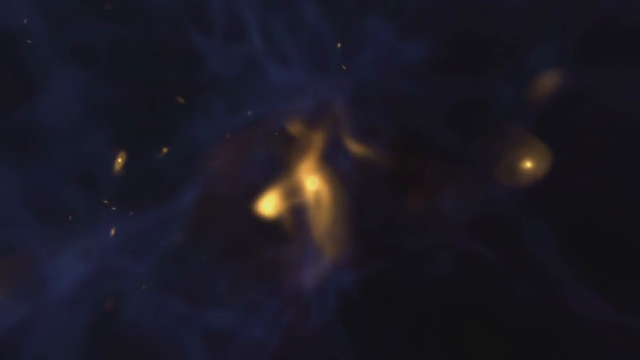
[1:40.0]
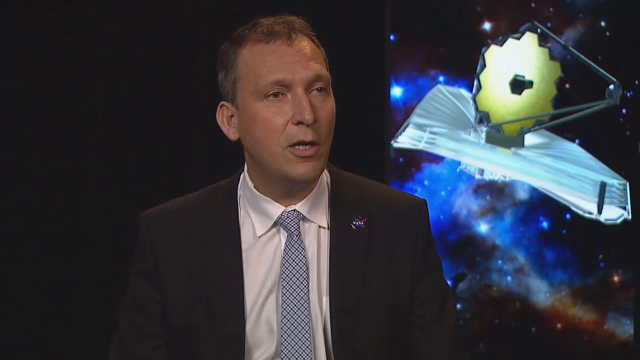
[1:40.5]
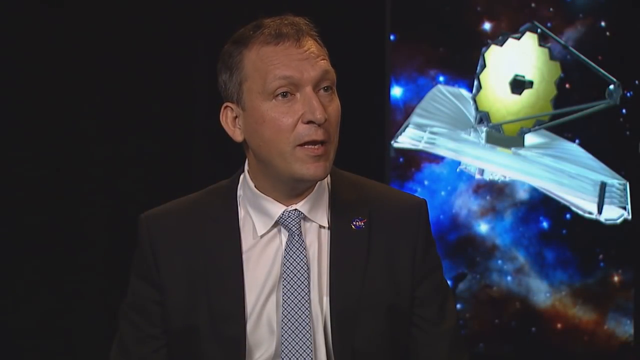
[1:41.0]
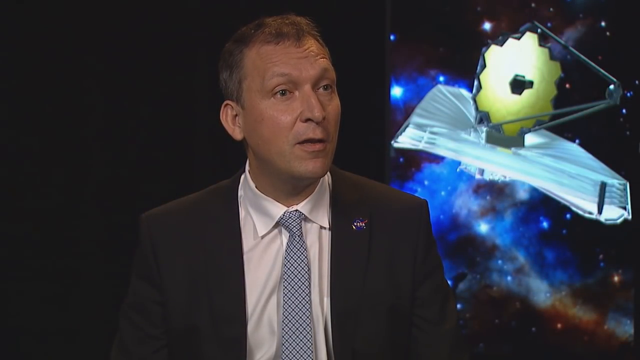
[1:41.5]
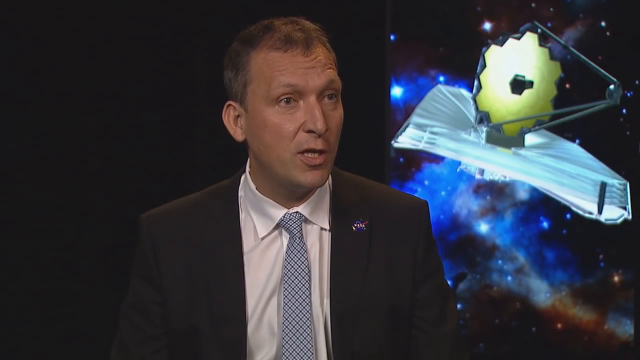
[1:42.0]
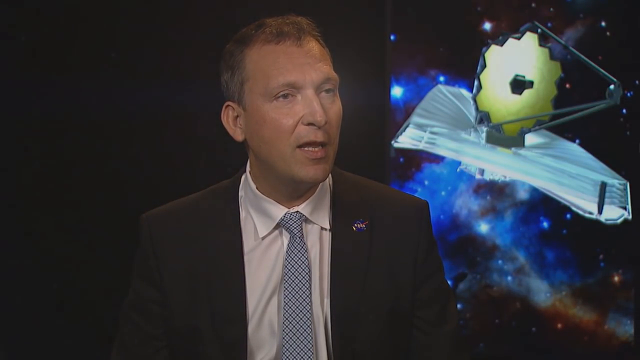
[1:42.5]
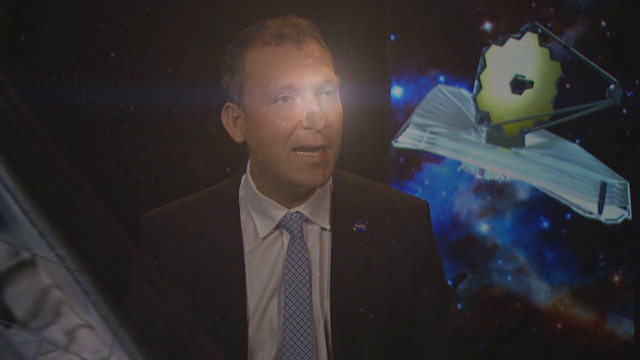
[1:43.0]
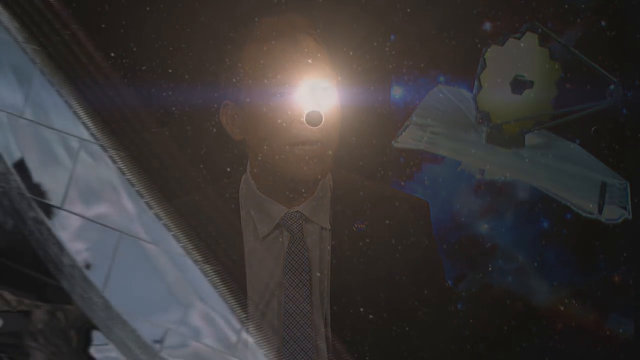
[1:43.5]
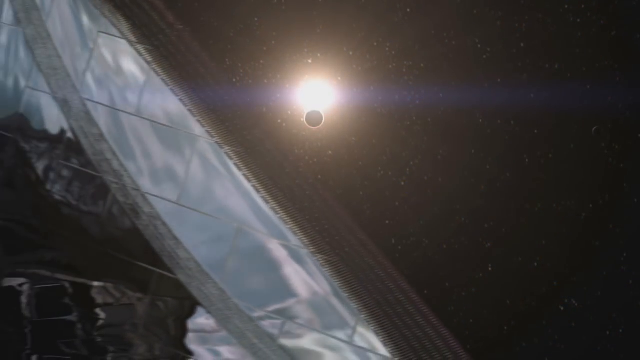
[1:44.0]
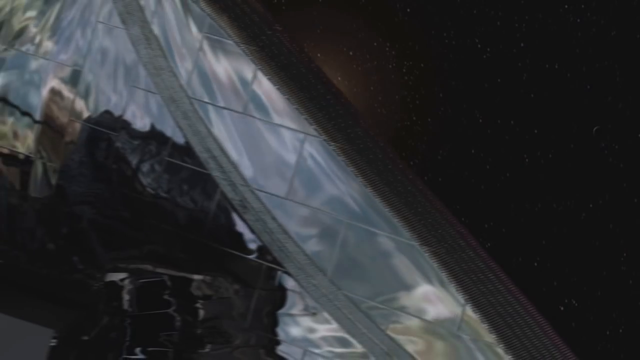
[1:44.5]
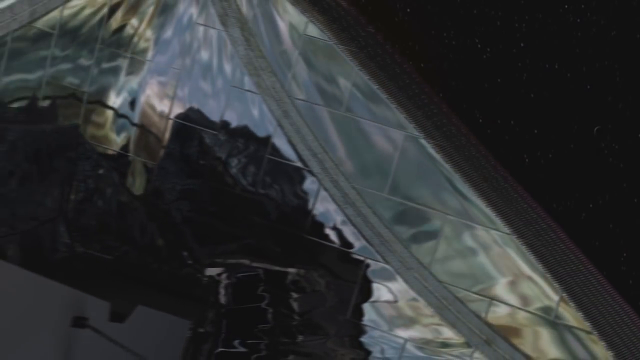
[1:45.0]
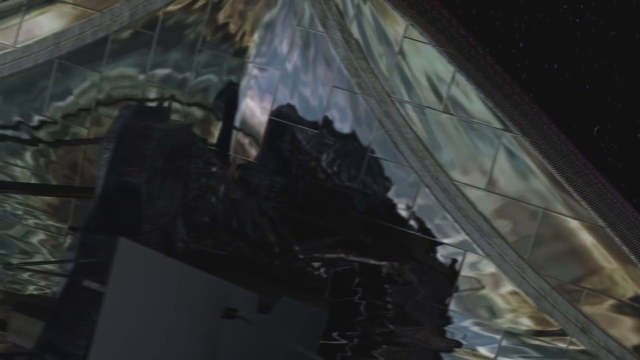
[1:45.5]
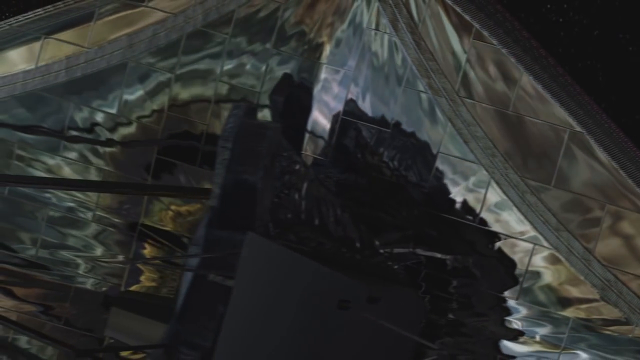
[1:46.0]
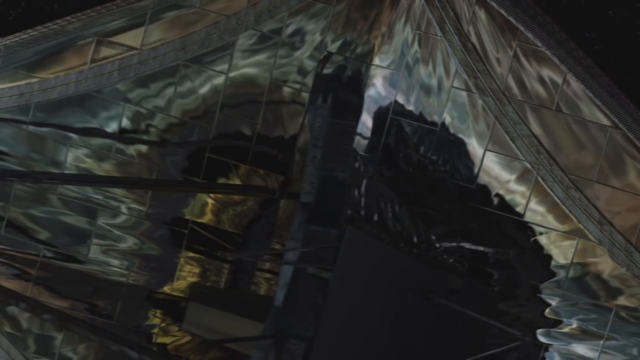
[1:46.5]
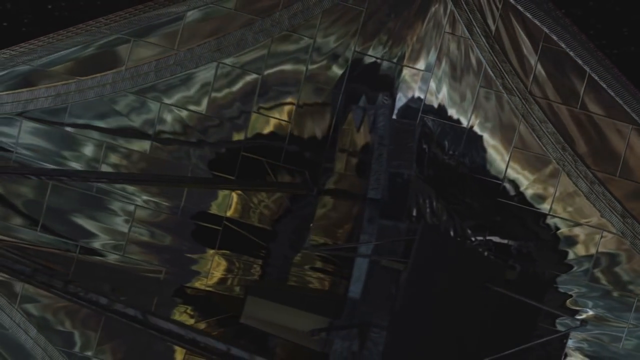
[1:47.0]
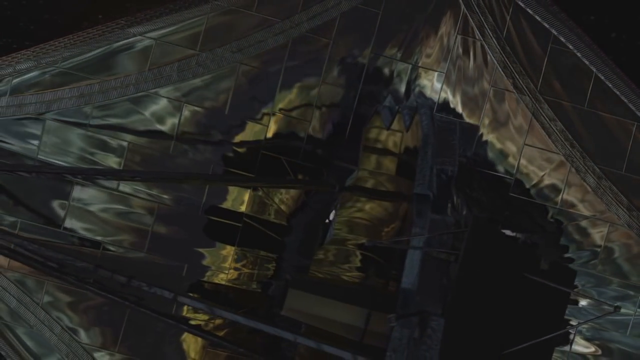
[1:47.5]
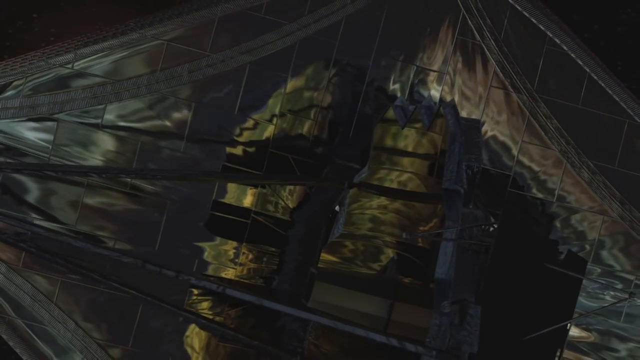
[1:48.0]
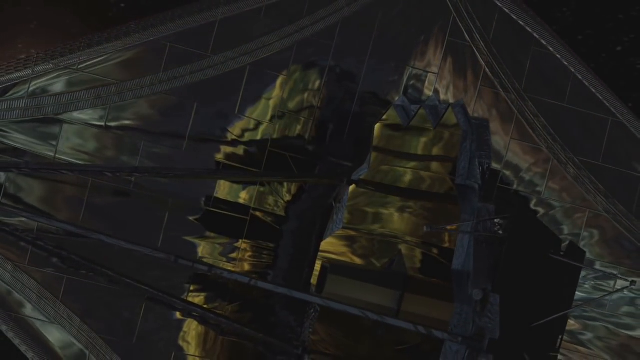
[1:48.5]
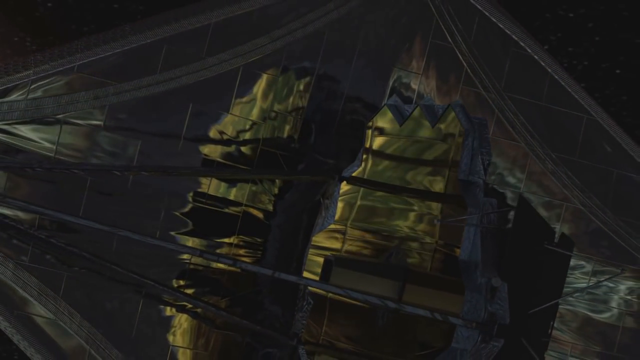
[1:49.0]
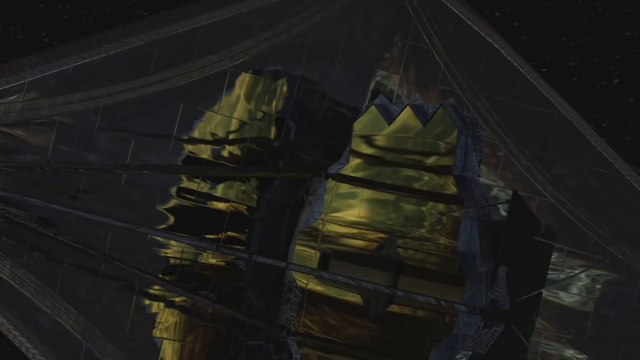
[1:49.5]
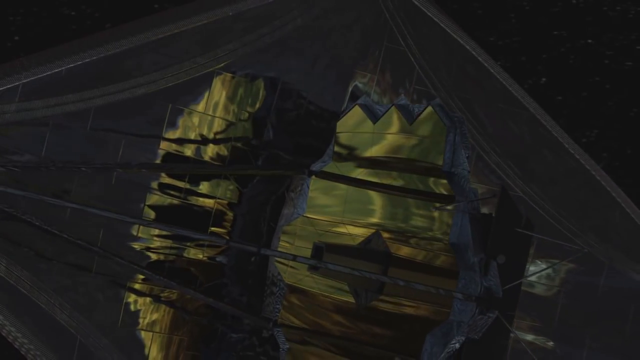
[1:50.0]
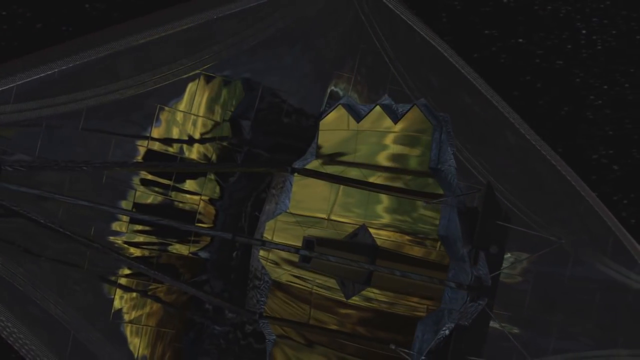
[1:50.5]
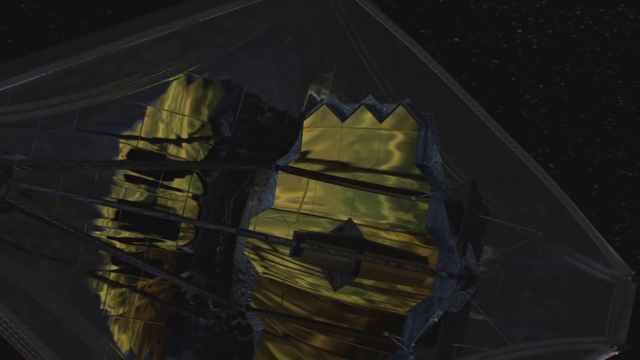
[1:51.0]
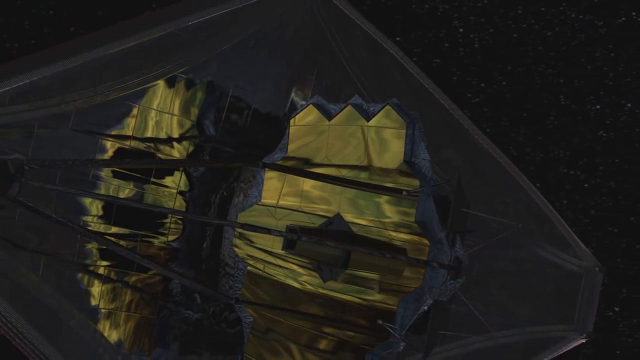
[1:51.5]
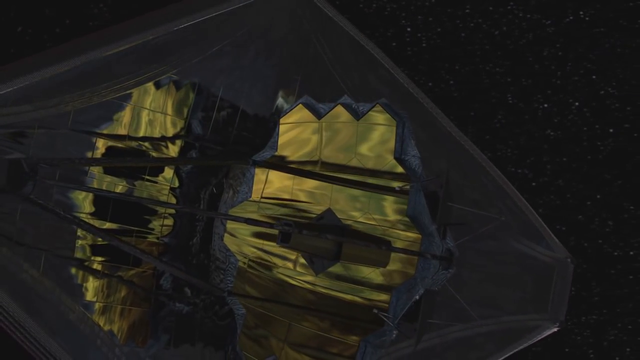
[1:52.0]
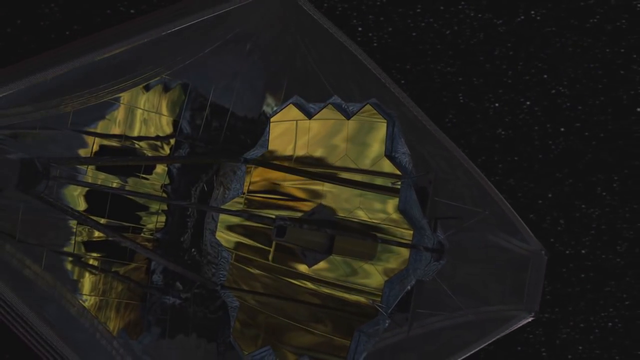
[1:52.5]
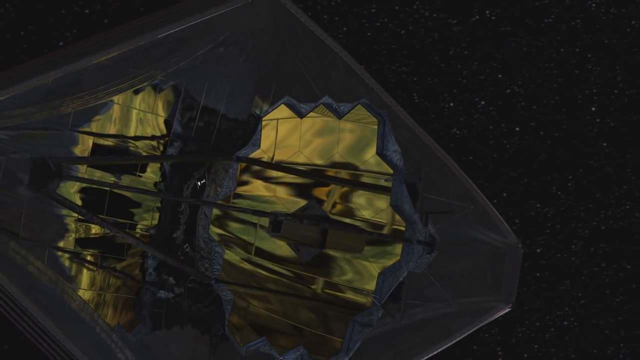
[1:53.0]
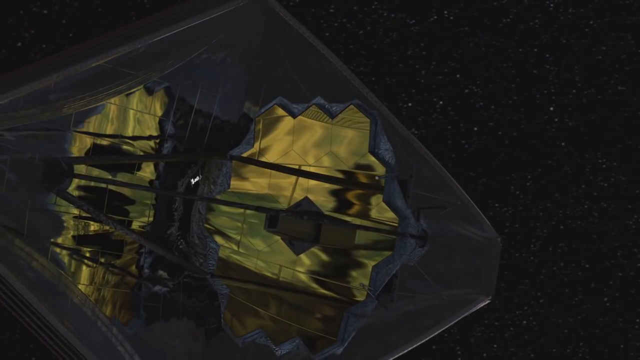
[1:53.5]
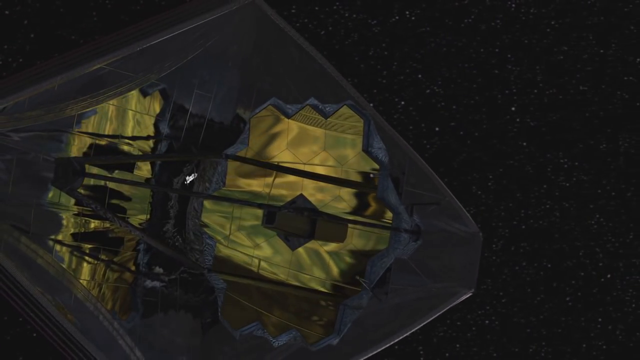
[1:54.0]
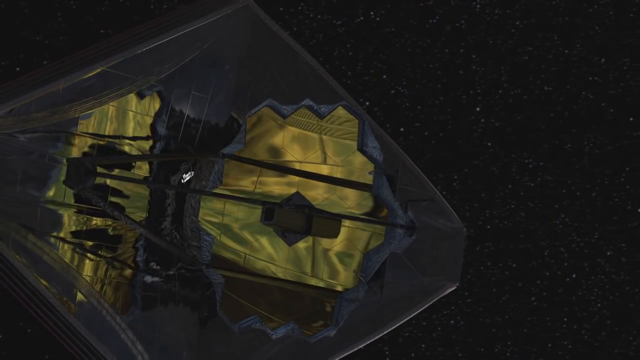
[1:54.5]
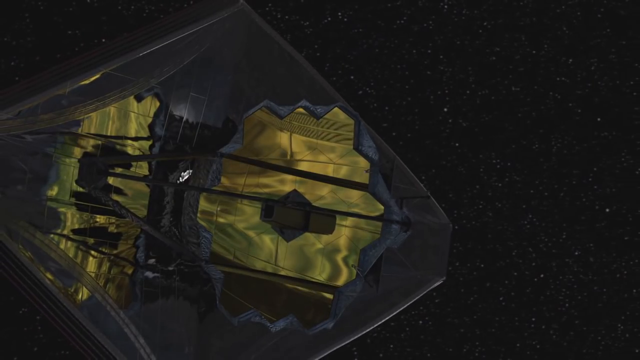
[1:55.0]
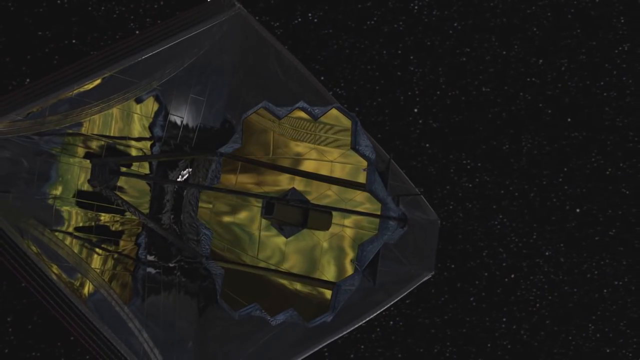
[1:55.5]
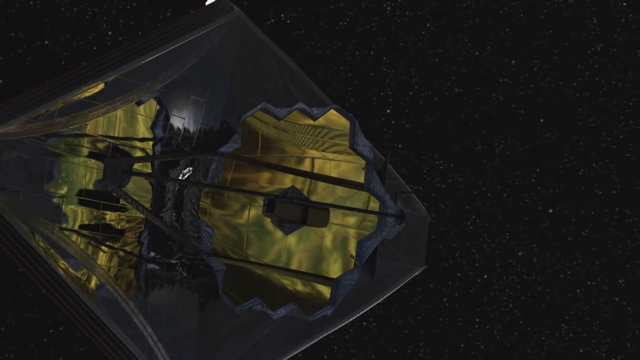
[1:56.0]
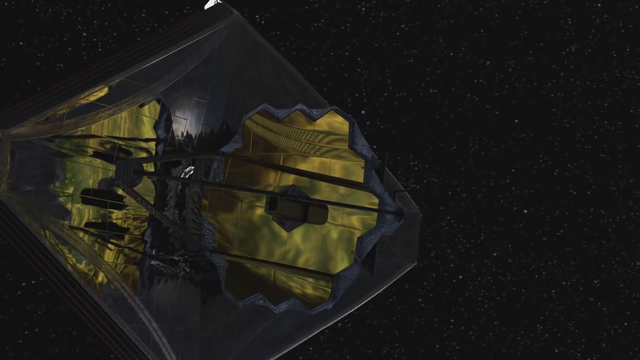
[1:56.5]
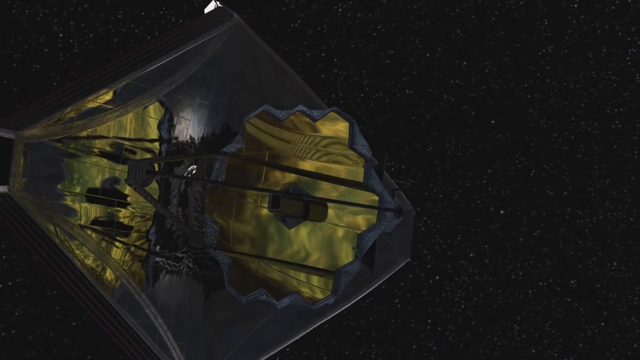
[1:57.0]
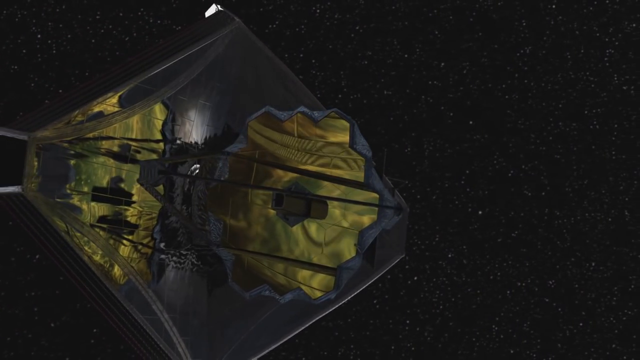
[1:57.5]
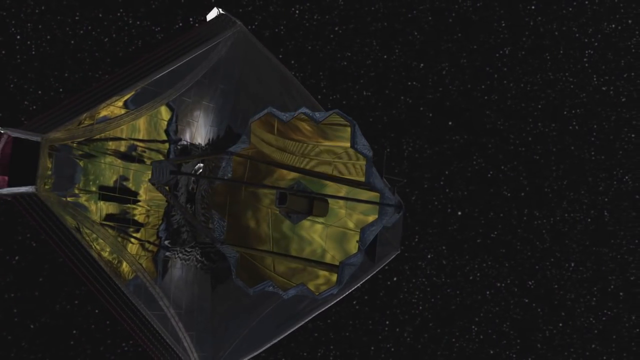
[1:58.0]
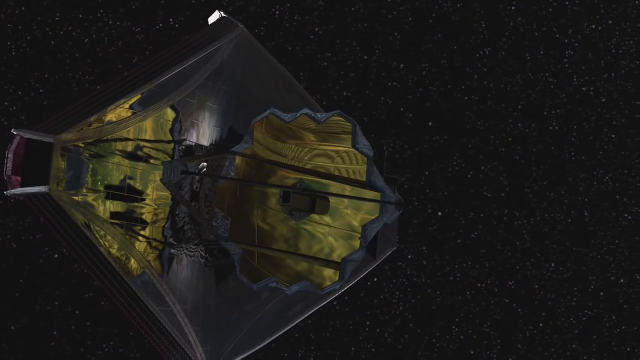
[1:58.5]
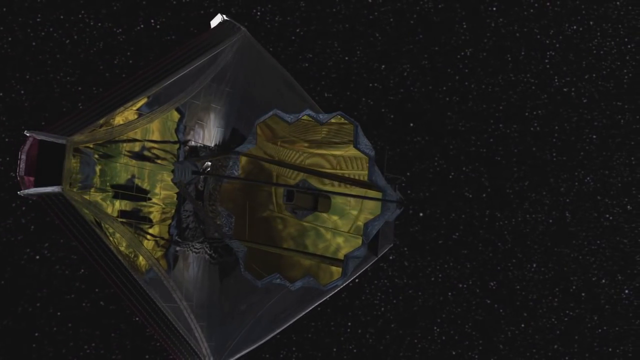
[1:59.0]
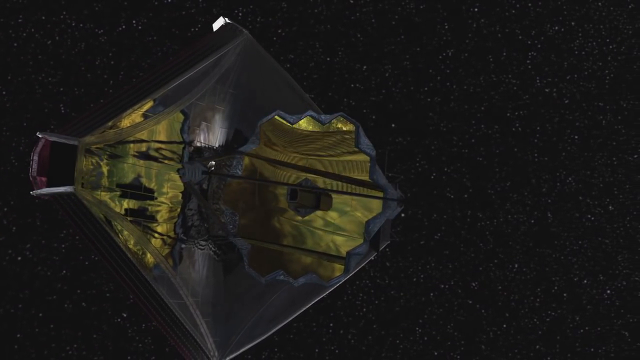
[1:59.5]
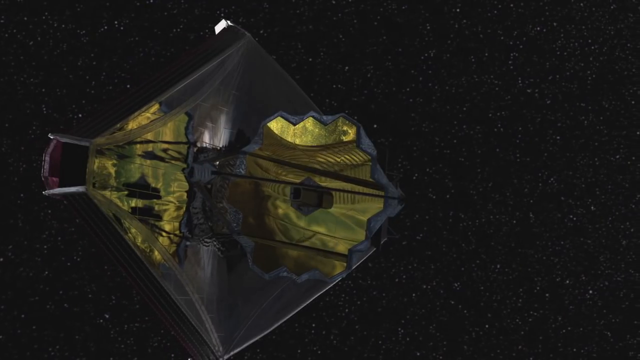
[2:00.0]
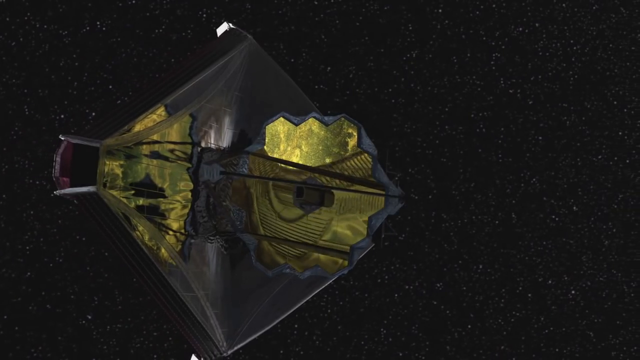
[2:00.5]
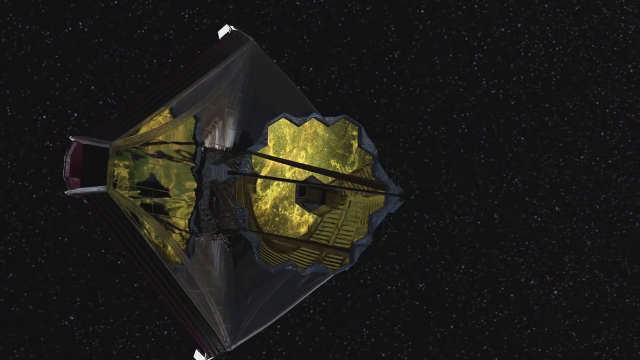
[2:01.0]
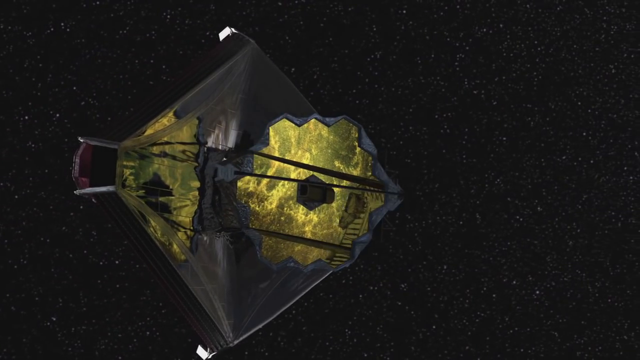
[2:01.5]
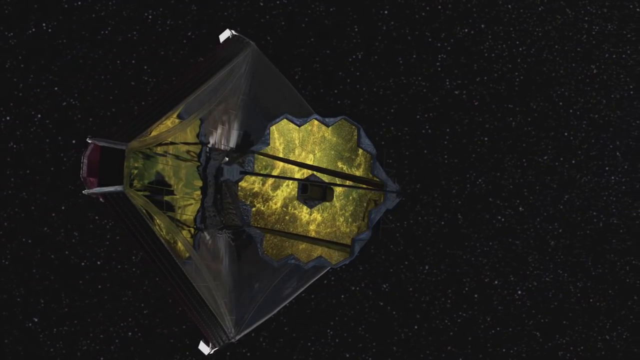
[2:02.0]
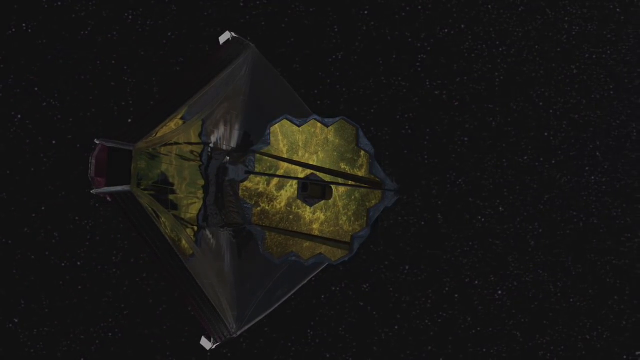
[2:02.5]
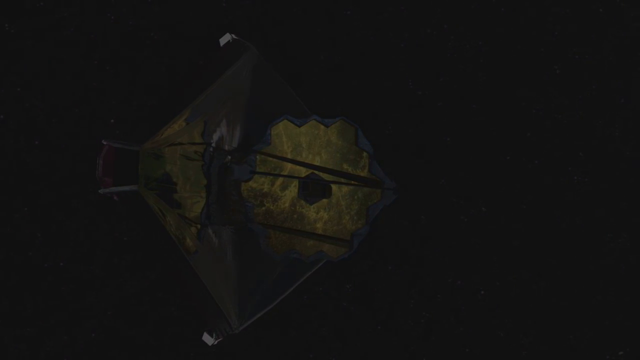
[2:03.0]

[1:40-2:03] A man in a black sports jacket, a white button-down shirt, and a blue and white tie stands to the left of an image and speaks about the telescope. The image changes to a computer-generated image of the completed telescope in outer space, with outer space visible around it. The screen returns to the man in the black jacket and blue tie as he speaks. The computerized images give a clear picture of what the telescope will look like as a finished product.